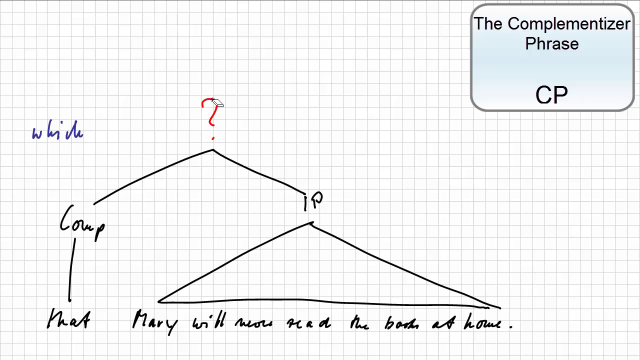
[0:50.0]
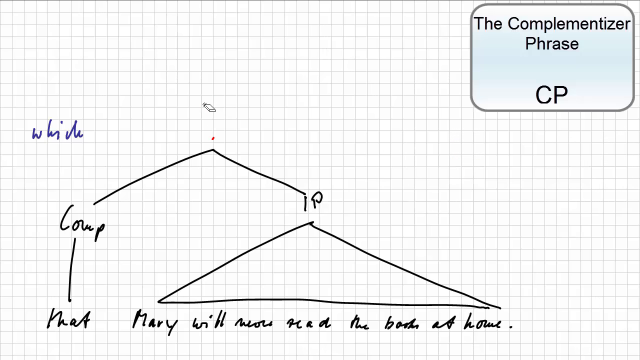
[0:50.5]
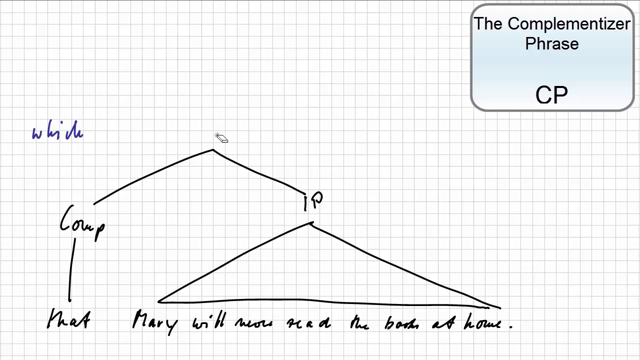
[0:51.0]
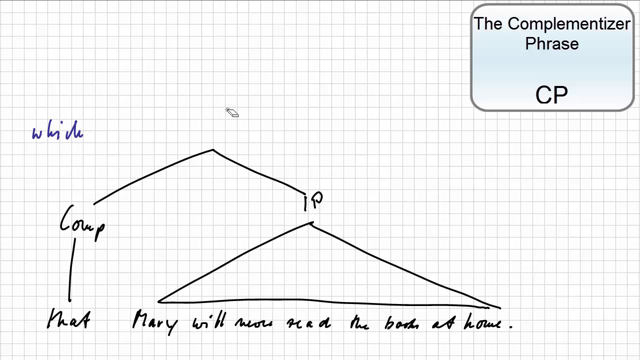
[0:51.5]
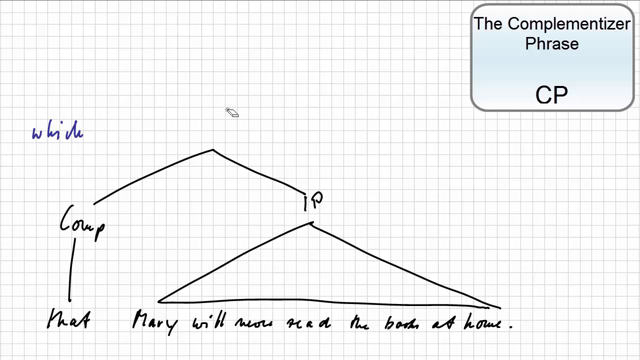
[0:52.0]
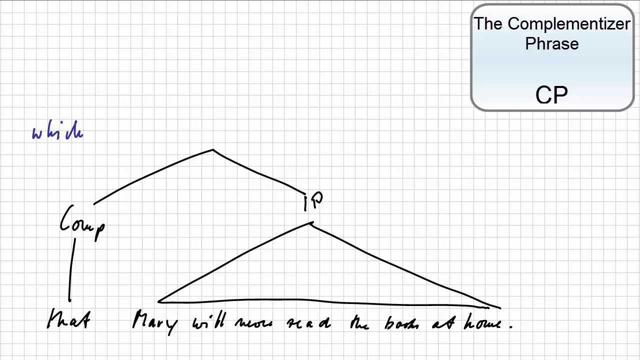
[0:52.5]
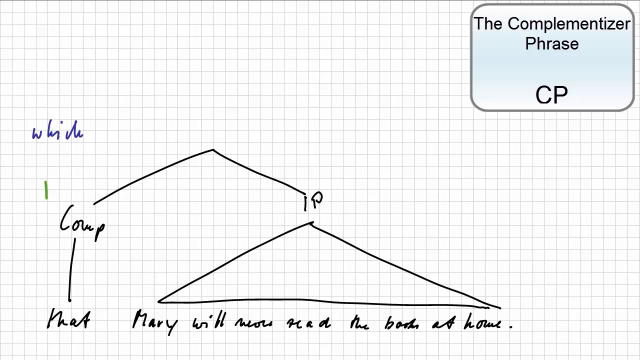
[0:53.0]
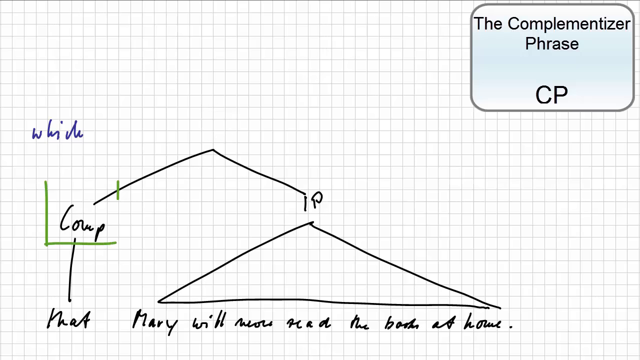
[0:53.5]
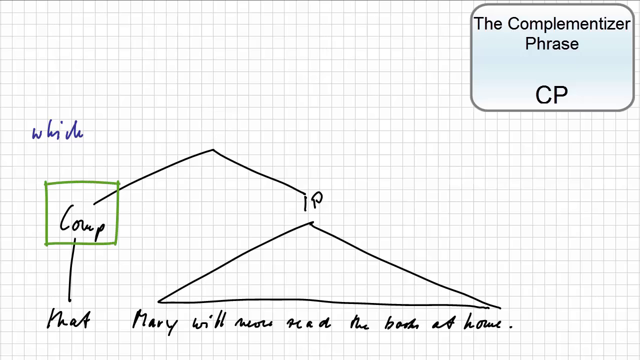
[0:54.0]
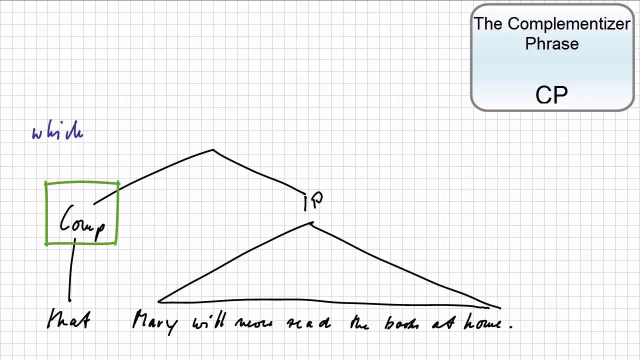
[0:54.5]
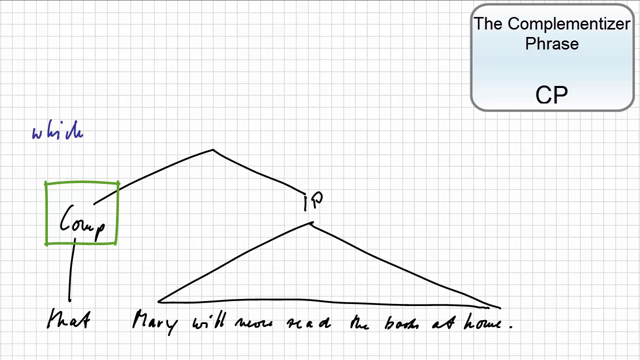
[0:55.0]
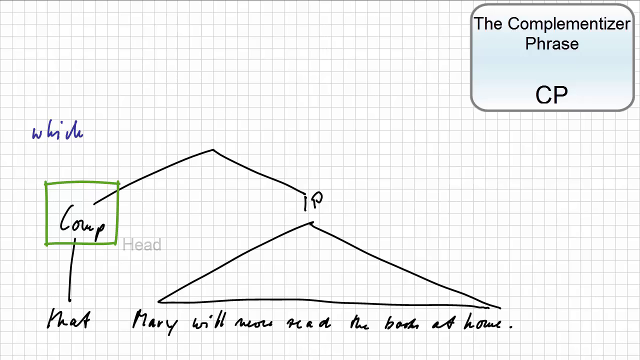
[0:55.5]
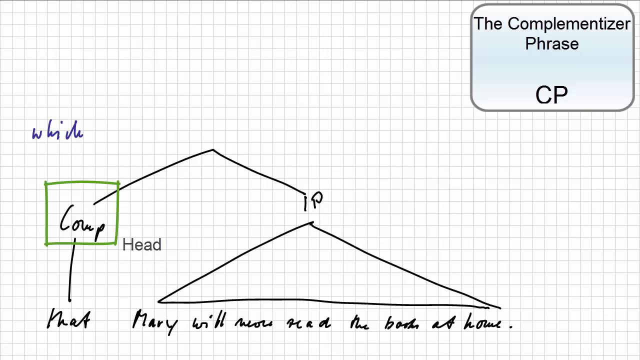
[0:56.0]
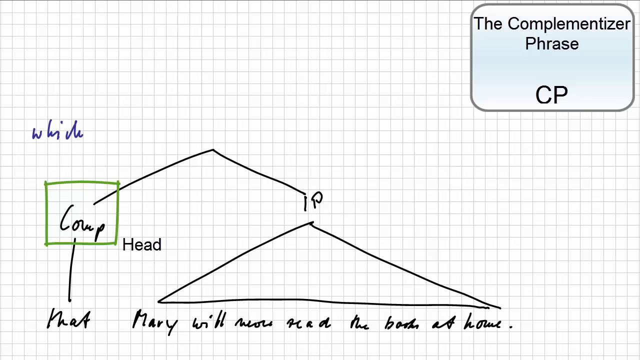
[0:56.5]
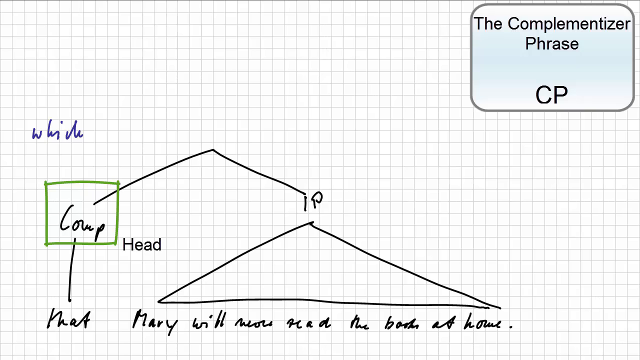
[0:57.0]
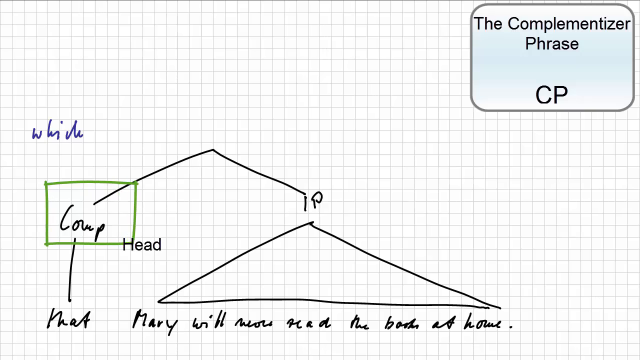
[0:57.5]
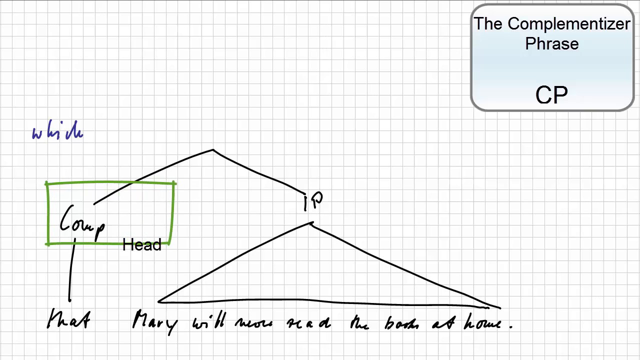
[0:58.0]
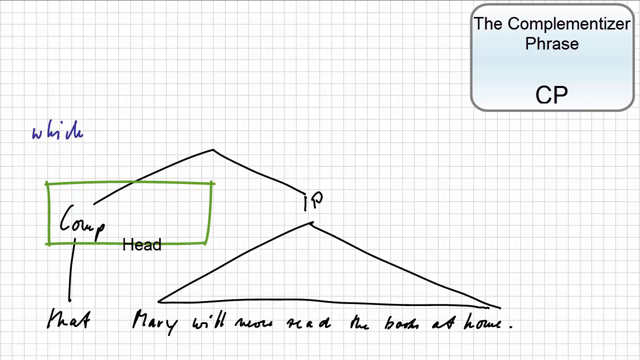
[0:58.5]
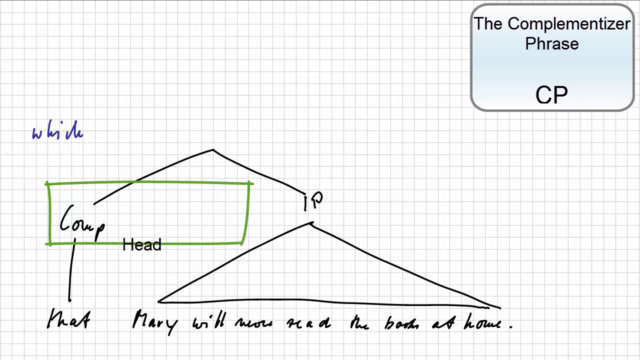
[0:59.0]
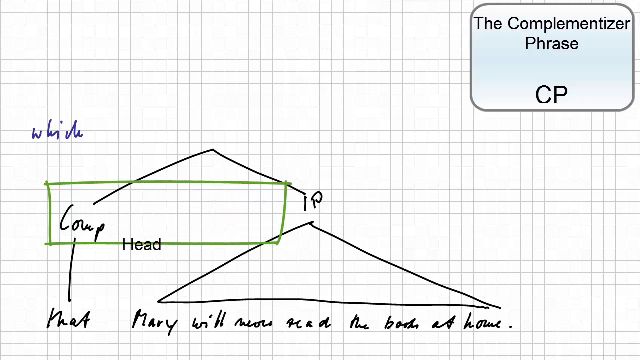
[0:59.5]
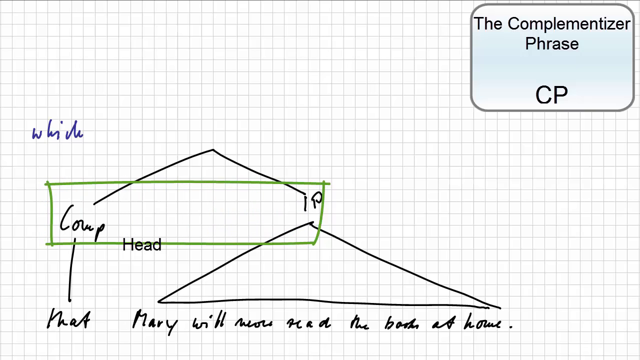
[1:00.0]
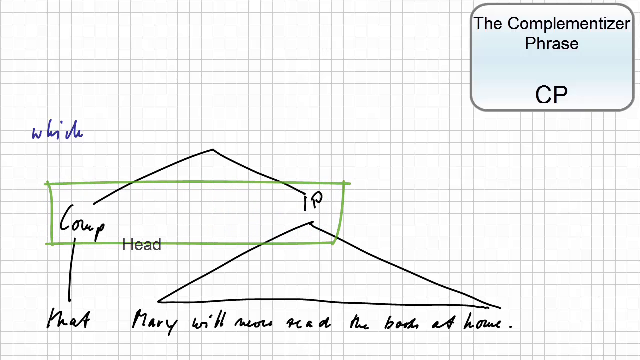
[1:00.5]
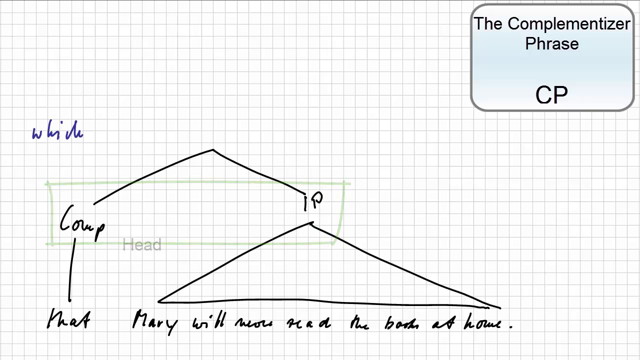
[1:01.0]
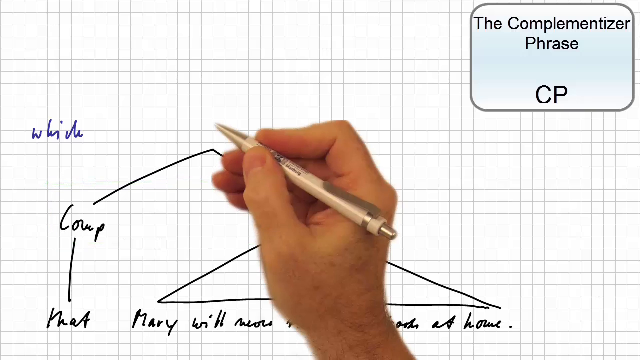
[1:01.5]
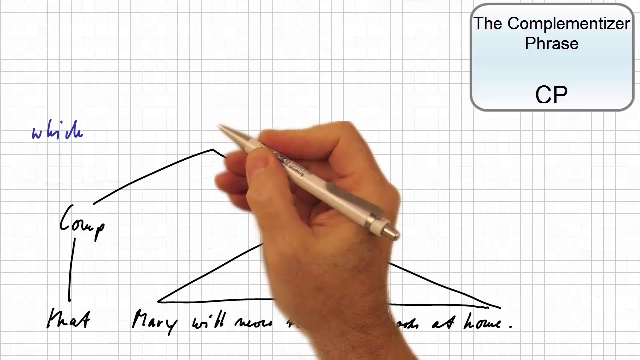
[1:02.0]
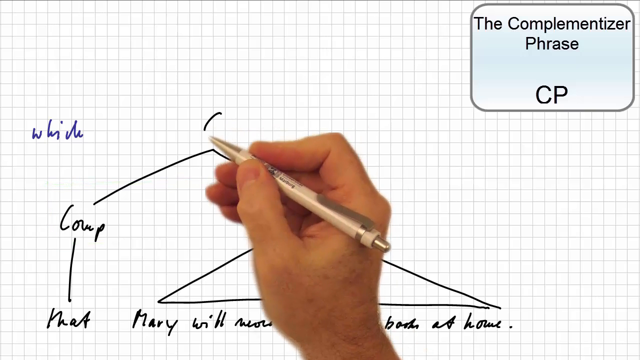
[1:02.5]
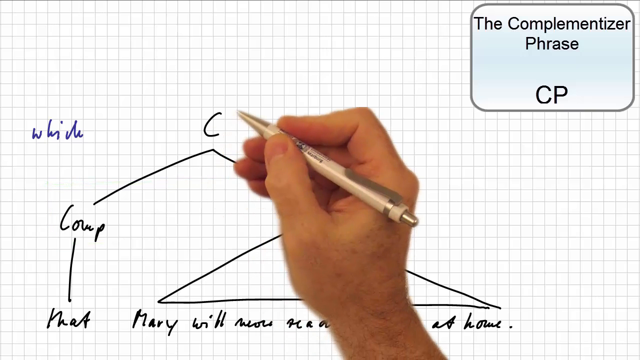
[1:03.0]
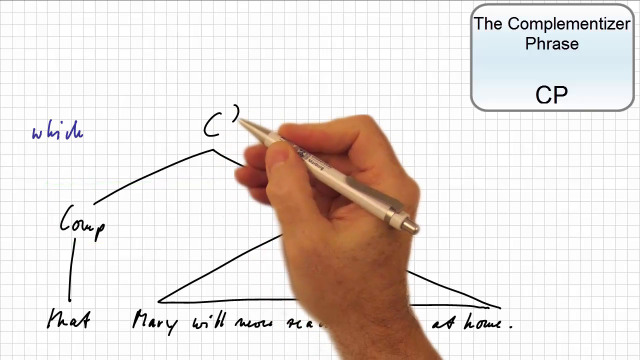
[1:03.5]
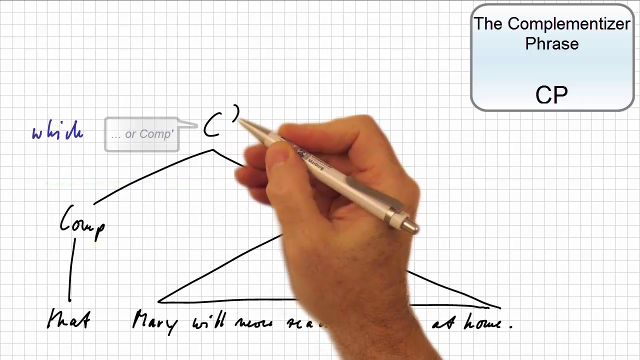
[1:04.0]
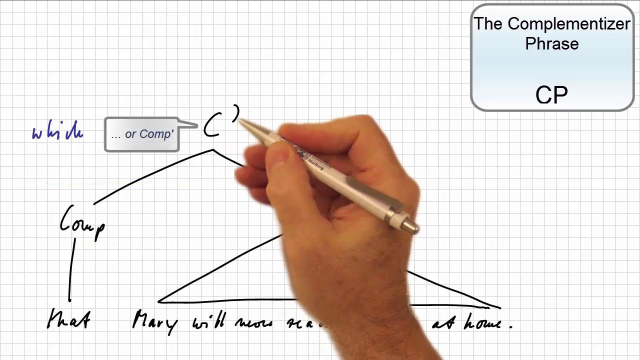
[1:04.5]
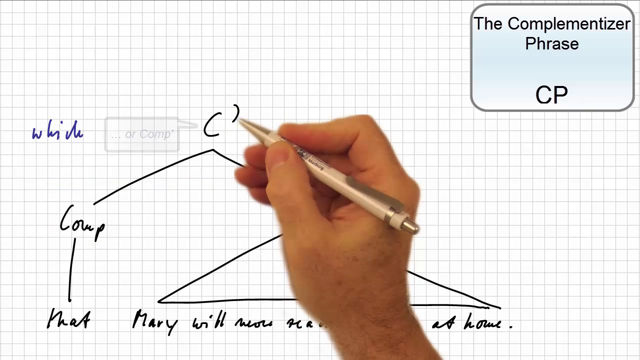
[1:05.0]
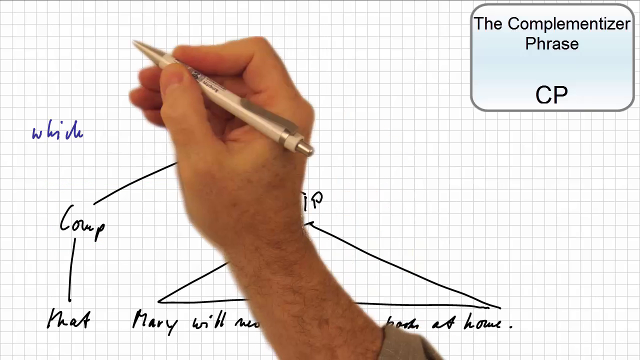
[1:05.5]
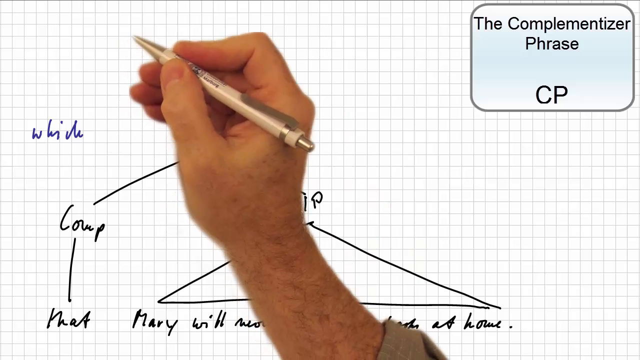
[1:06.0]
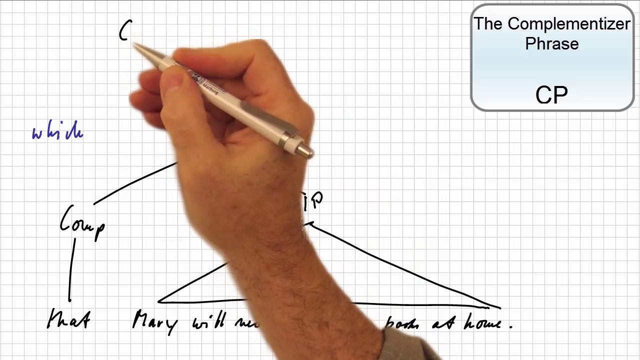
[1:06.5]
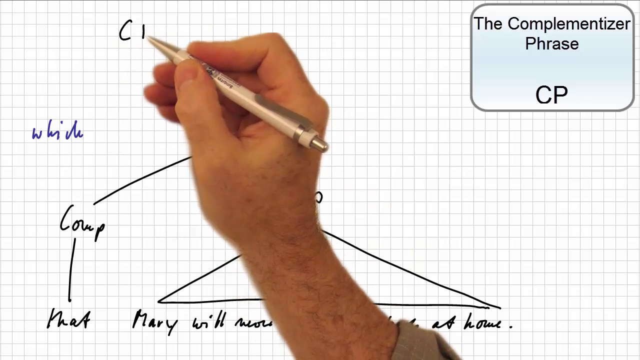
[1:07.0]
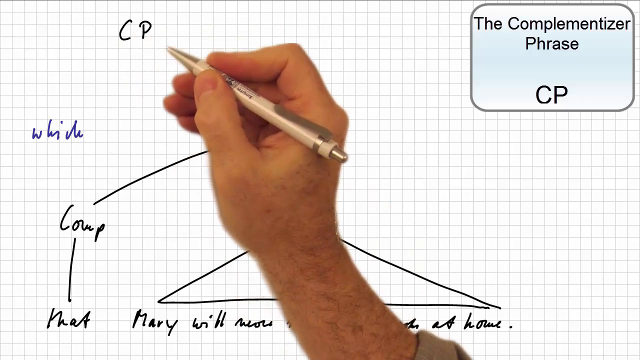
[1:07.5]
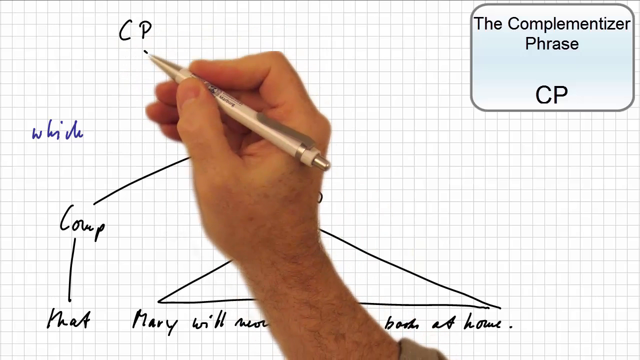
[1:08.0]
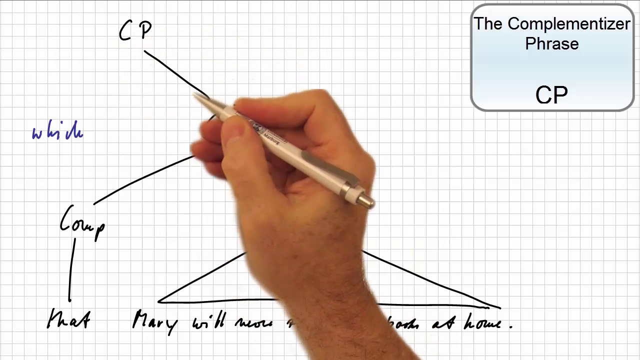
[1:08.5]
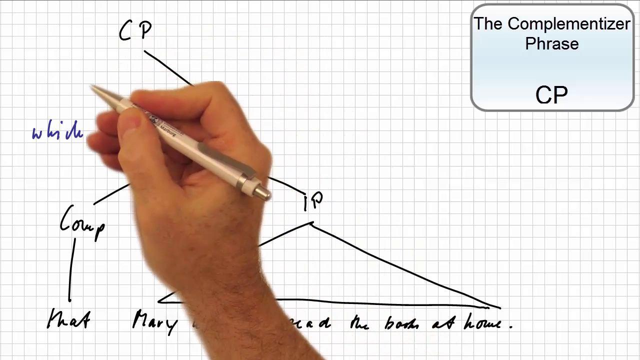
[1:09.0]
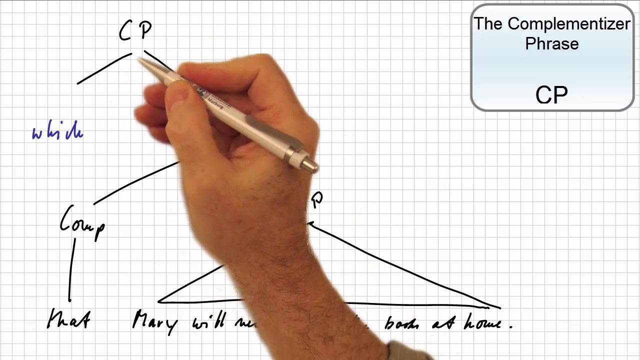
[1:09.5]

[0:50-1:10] A page of notebook paper is shown. In the top right is a comment that reads "the complementizer phrase". A man has drawn a triangle, and at its bottom it says "Mary will now read the book at home". At the top of the triangle is "IP". On the left, "mat" is connected by a black line to "comp". "Comp" and "IP" form a kind of roof, with a red question mark at the top of the roof. On the left side, the man has written the word "which" in a blue font. He then erases the question mark. Next, he puts "comp" in a green box with green frames. The word "head" appears, and he expands the box so that it takes in "IP". He then takes a pen in his right hand and types "C", and at the top he writes "CP". He connects two things with a black line, and another black line is connected to "which".